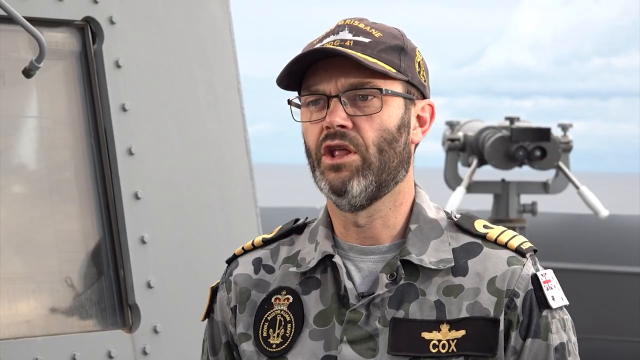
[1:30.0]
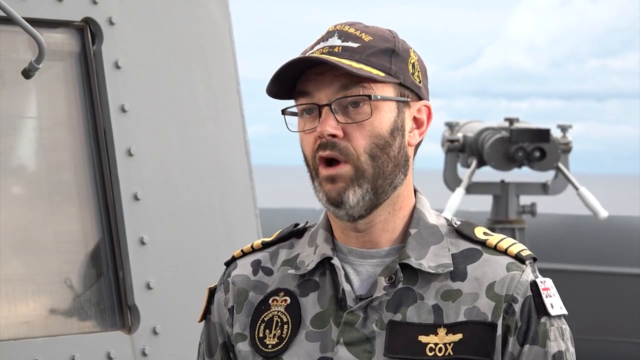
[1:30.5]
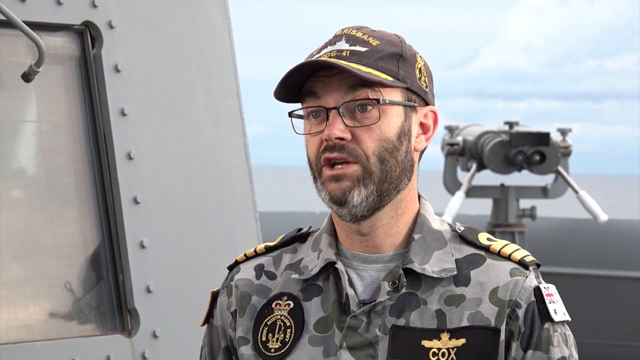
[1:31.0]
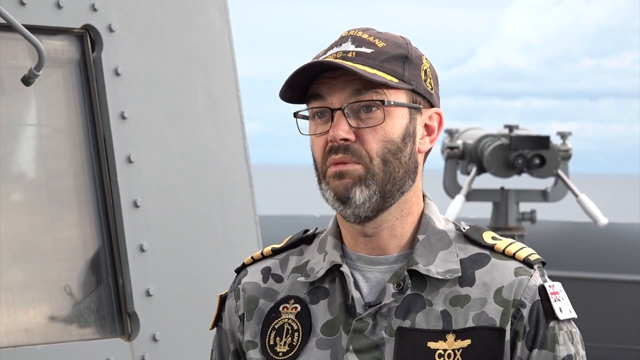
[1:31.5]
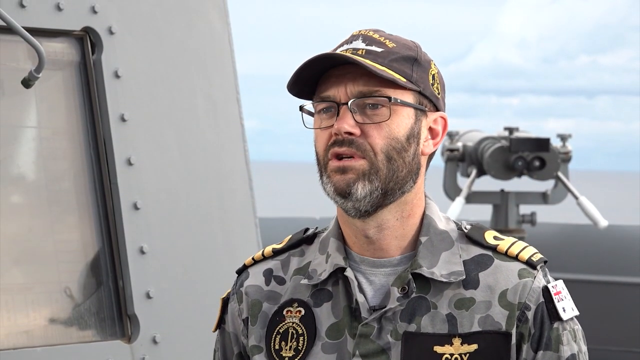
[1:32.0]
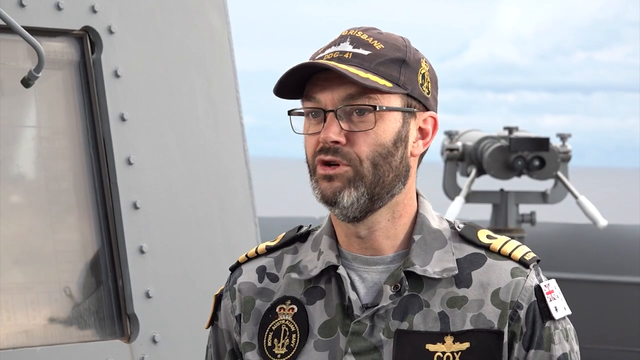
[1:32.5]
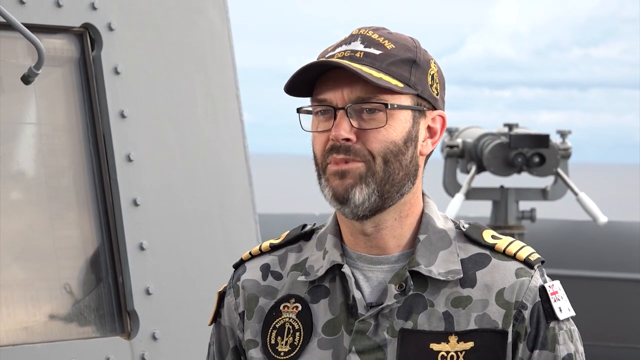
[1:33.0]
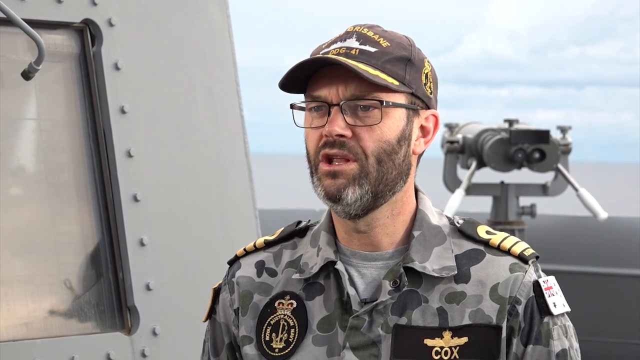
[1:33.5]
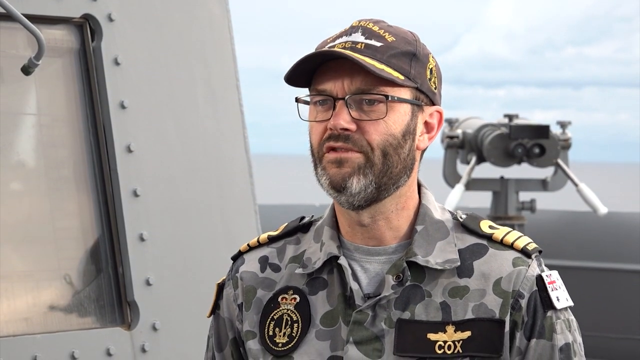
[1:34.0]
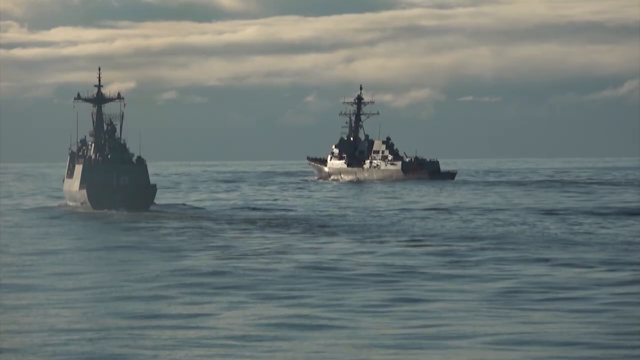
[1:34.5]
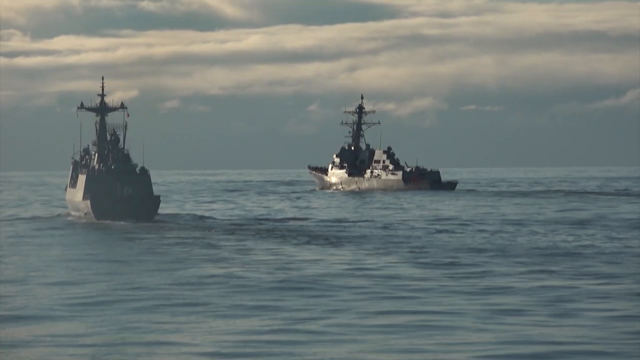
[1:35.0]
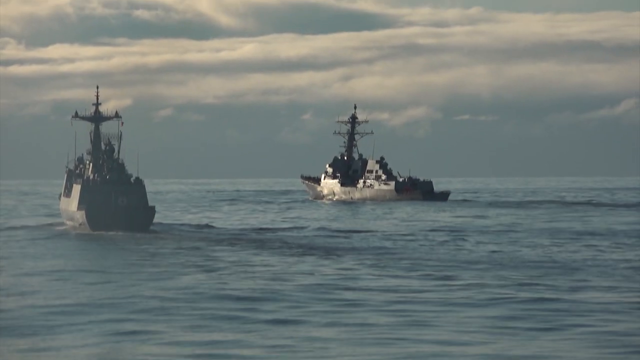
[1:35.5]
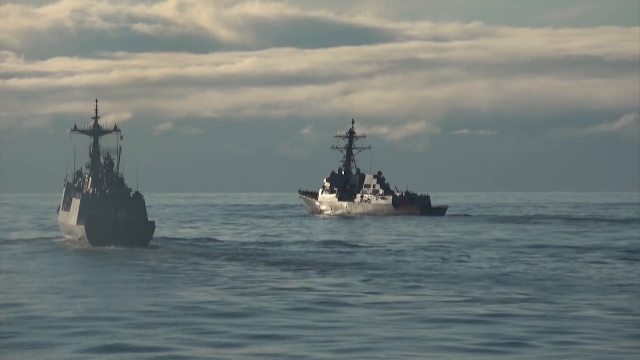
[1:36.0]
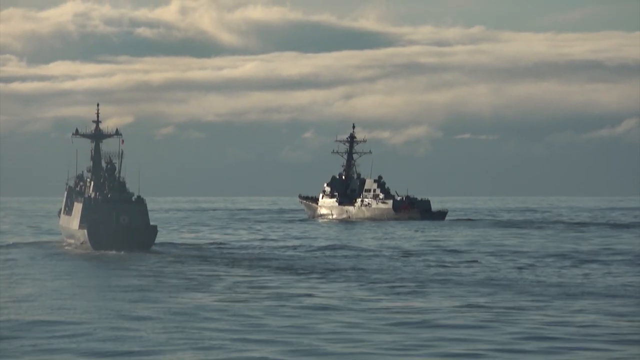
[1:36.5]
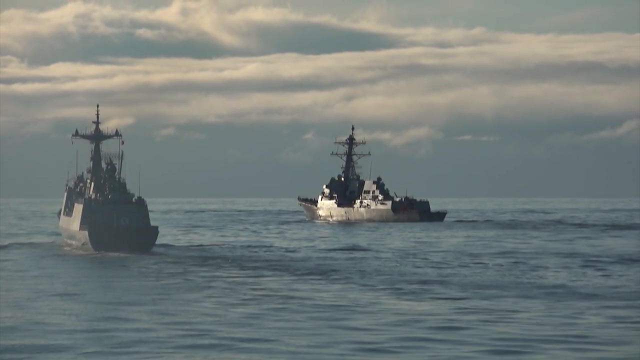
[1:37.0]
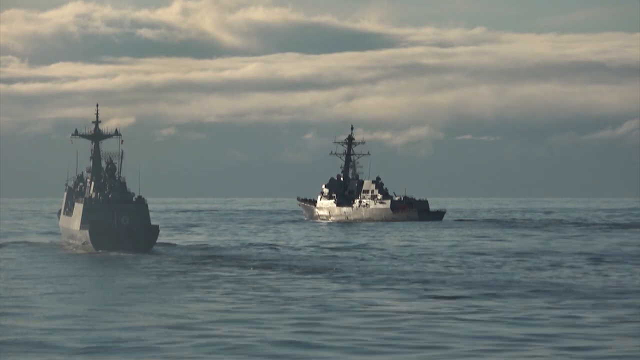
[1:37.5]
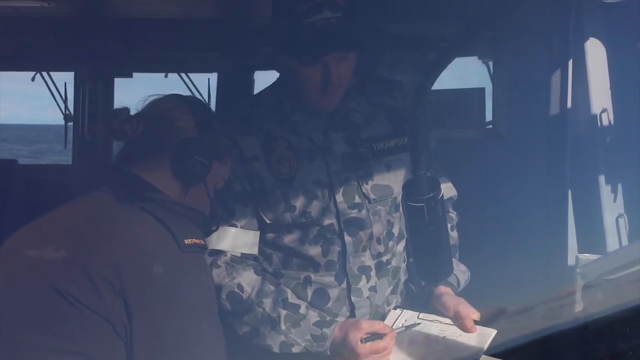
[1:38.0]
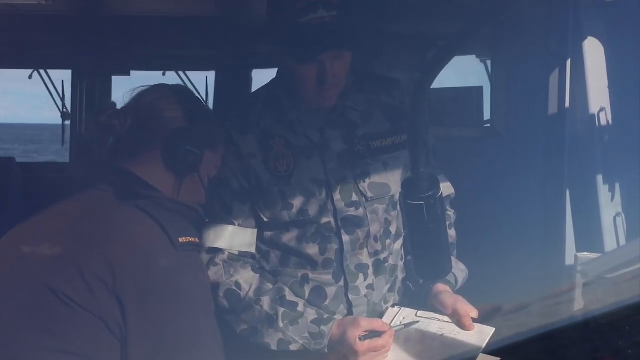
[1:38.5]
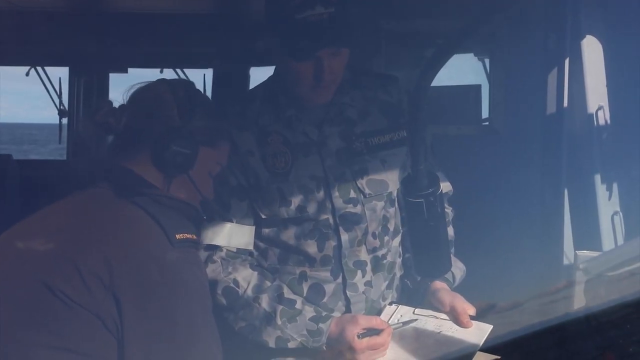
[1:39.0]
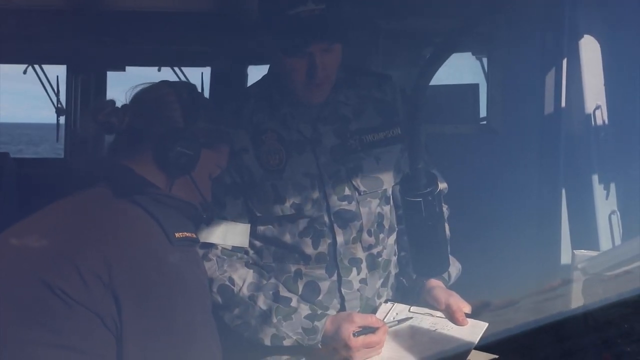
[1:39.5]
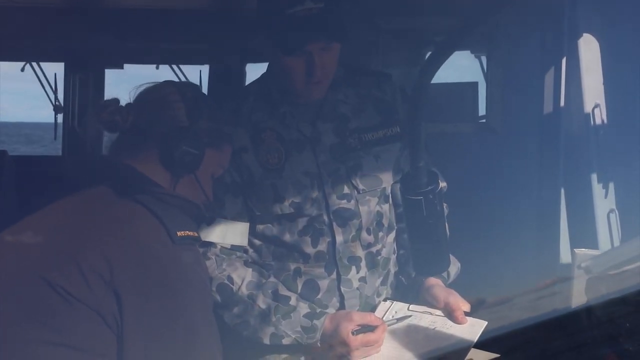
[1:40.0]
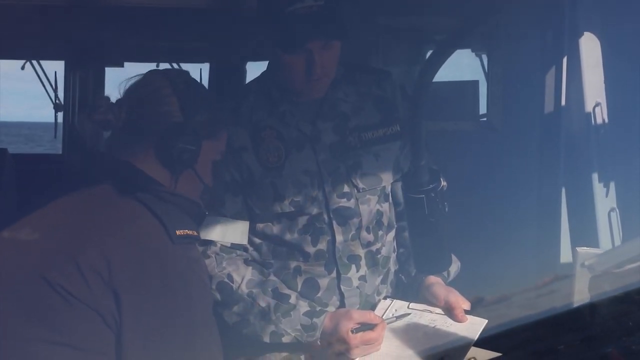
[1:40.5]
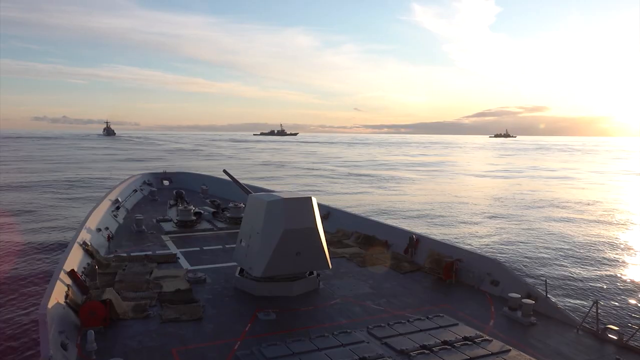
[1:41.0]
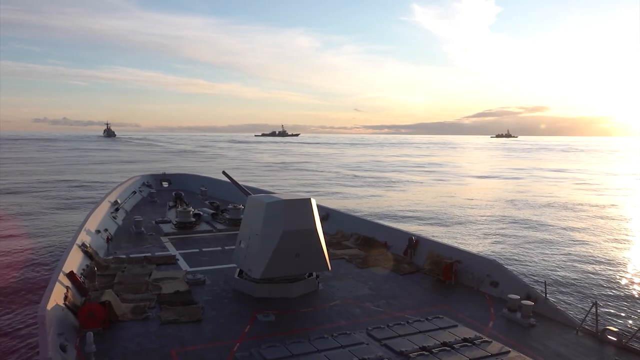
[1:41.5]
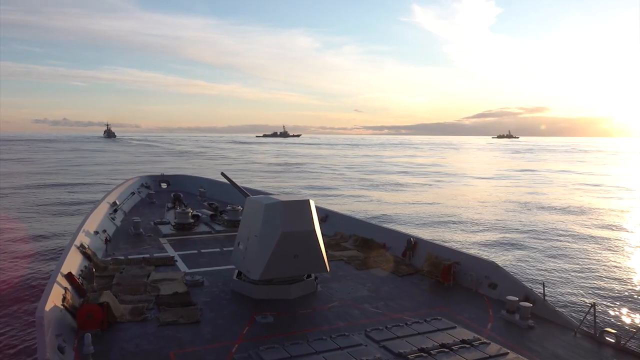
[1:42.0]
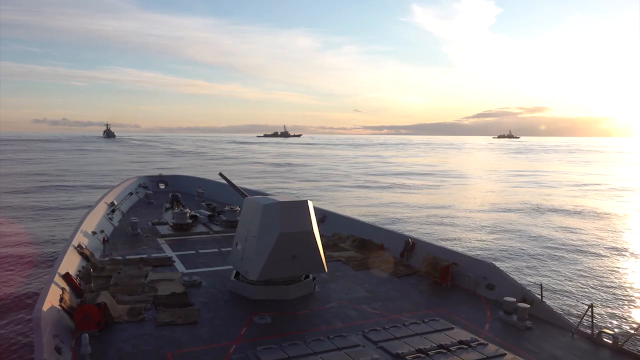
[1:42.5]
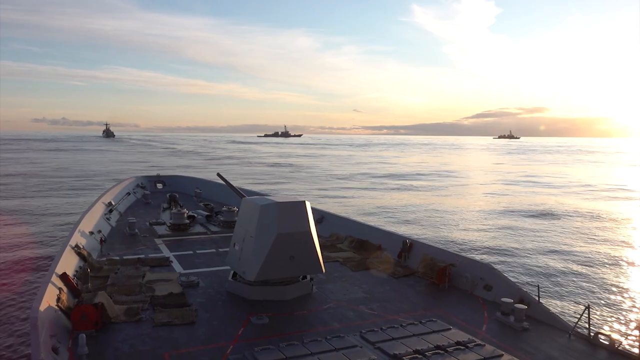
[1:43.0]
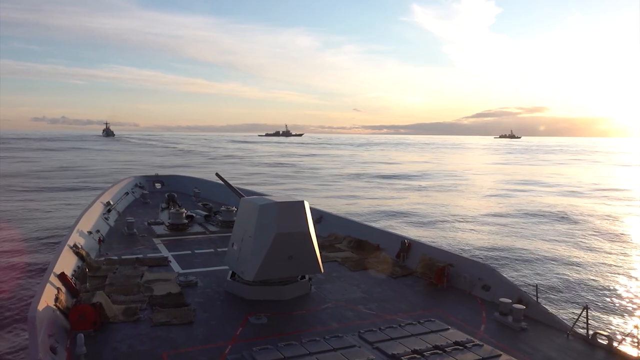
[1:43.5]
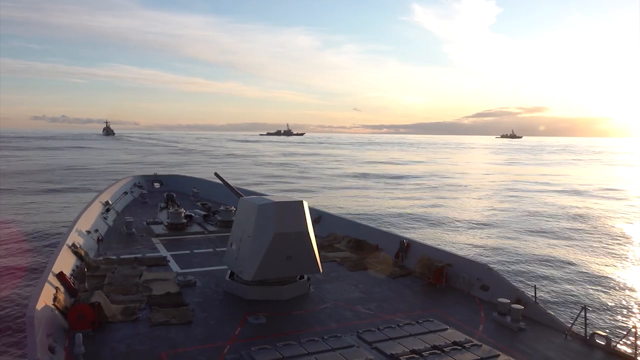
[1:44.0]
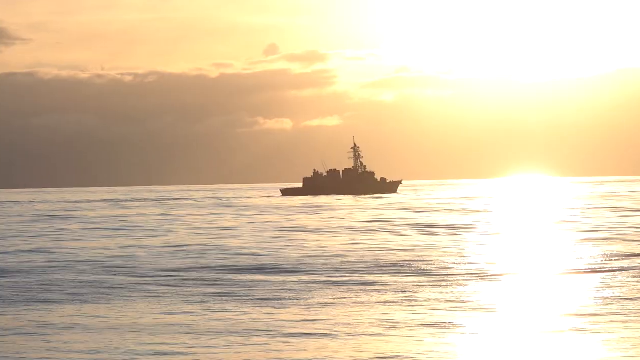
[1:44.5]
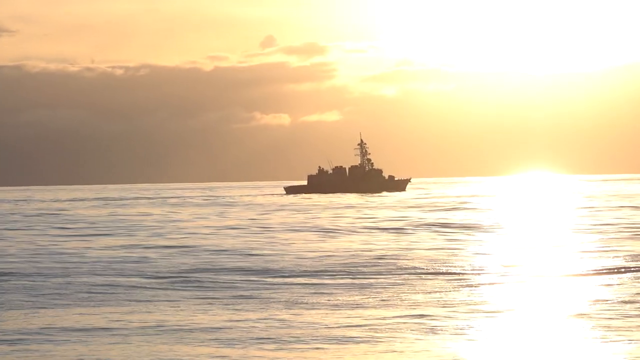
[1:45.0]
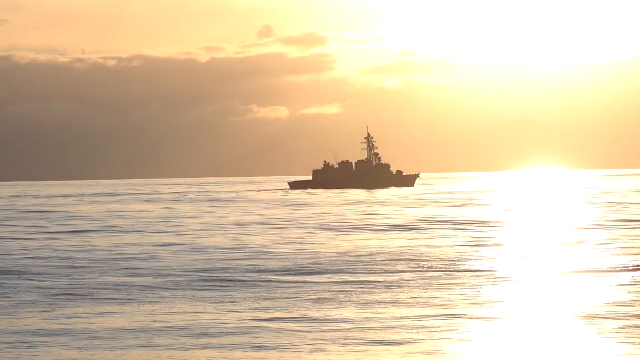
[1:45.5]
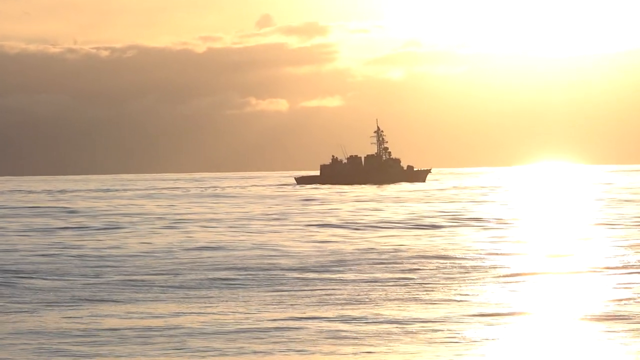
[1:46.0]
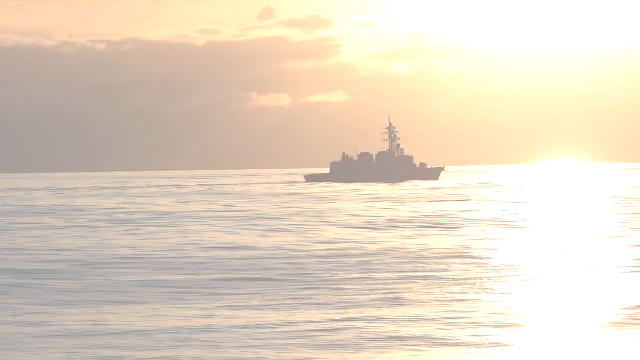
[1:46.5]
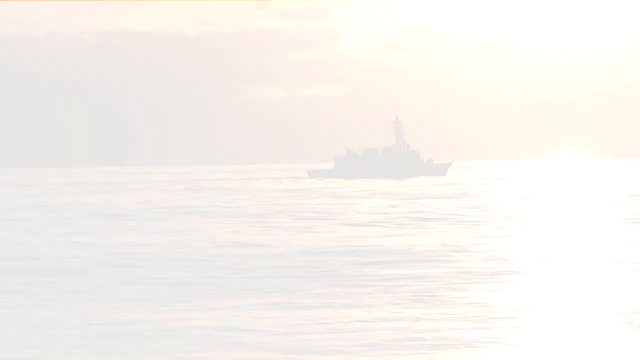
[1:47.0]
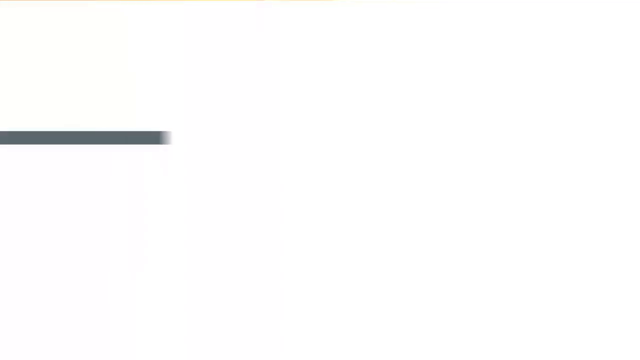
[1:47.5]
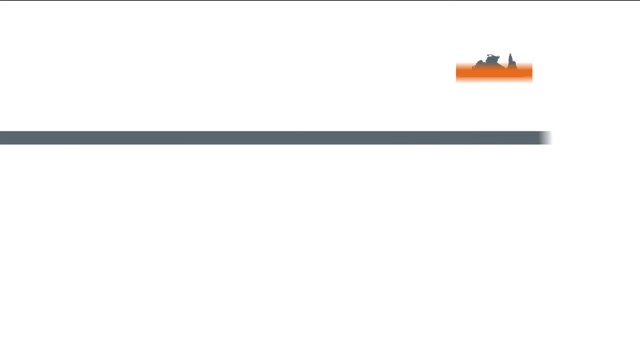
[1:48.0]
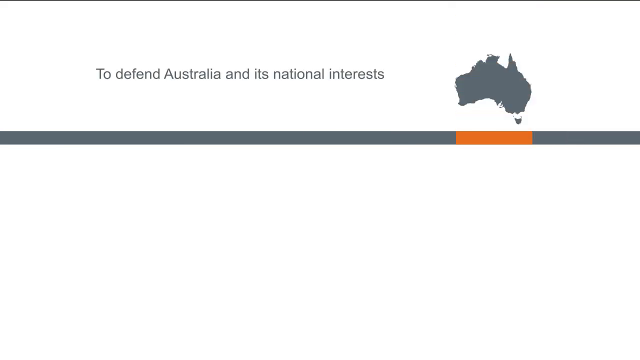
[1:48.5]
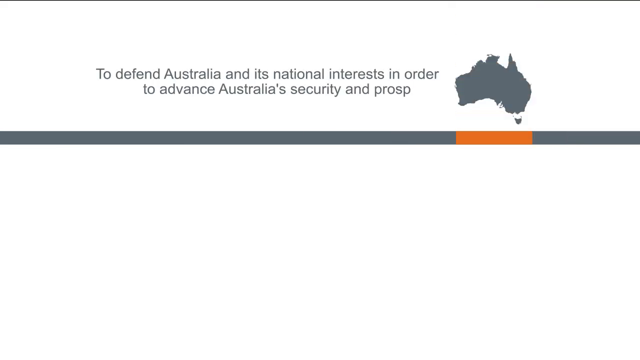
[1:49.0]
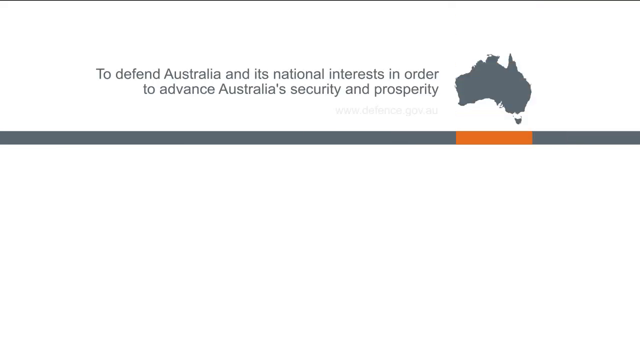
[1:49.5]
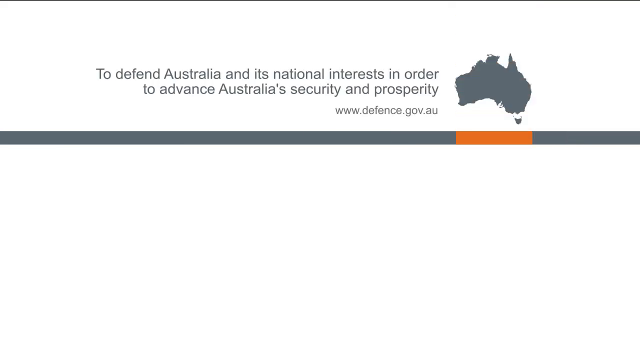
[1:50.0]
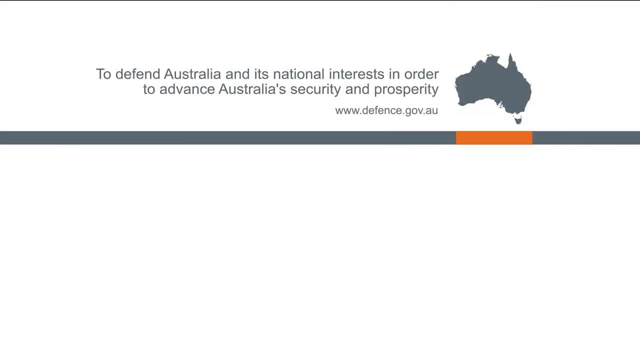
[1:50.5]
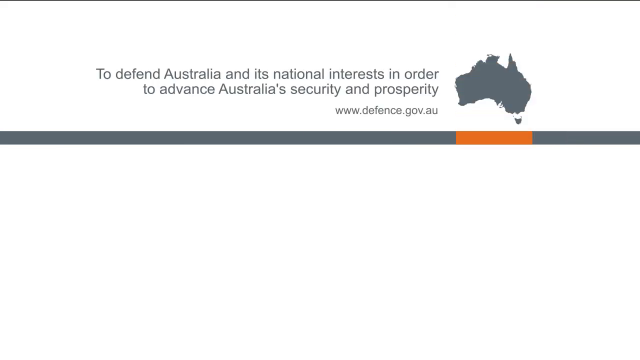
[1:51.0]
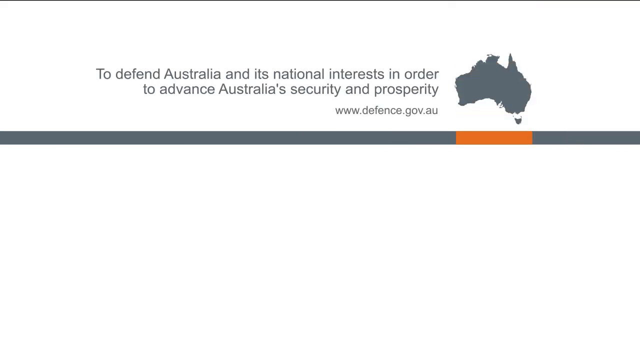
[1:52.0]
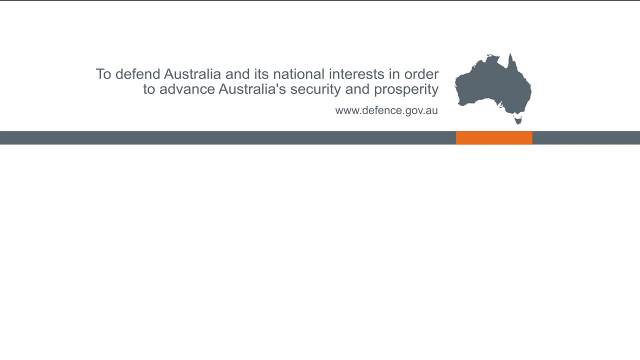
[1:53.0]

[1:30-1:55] A man in a uniform and a hat, with the name Cox on the front of the uniform, talks directly to the camera and appears to be on a ship. The scene moves to a view of the sea with clouds in the sky and two what appear to be battleships driving off into the distance. Inside a ship, there are two men: one appears to have headphones on, and the other is standing up, and what look like army-type fatigues are clearly visible. The view moves to what looks like the front of a ship with a cannon on it, looking out to the sea, where three ships are in the distance. A side-on view shows a battleship in the distance at what looks like sunset, with the sun very bright in the distance and shining onto the sea, so the ship looks to be in shadow like a silhouette. Finally, a sort of title card in white shows a map of Australia in black or grey with the words "to defend Australia and its national interests in order to advance Australia's security and prosperity www.defence.gov.au". It appears to be some sort of promotional video for what looks to be a defence service for Australia, a navy of some sort.